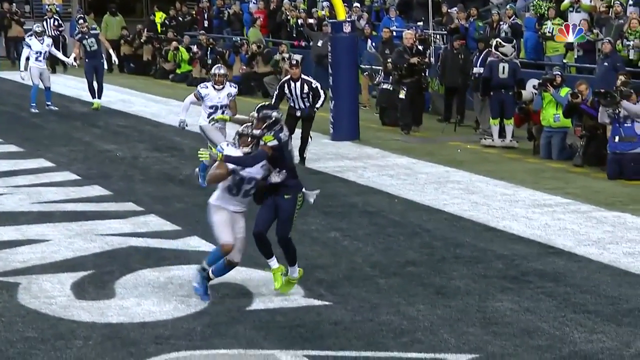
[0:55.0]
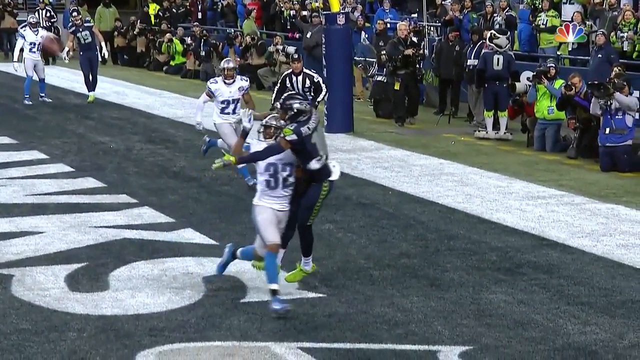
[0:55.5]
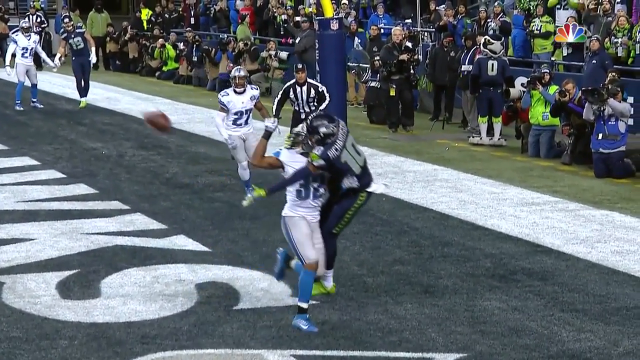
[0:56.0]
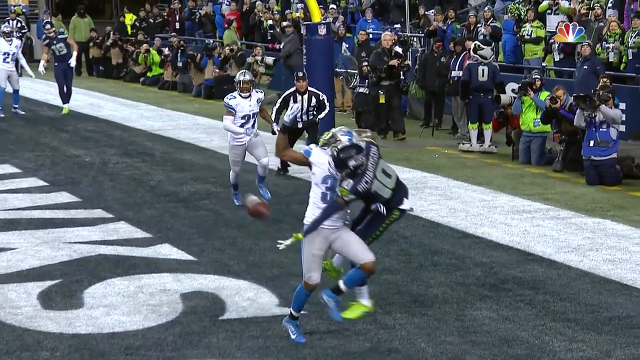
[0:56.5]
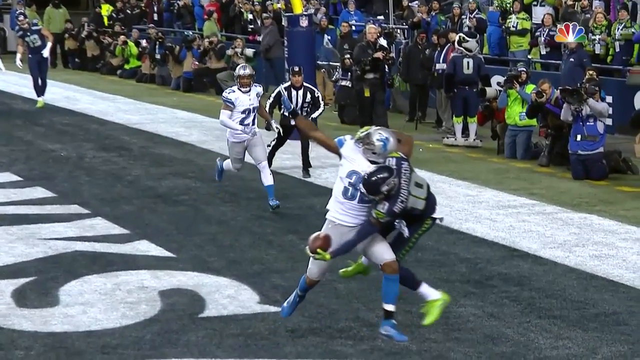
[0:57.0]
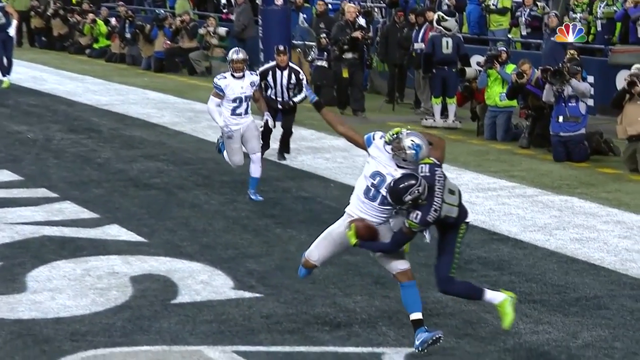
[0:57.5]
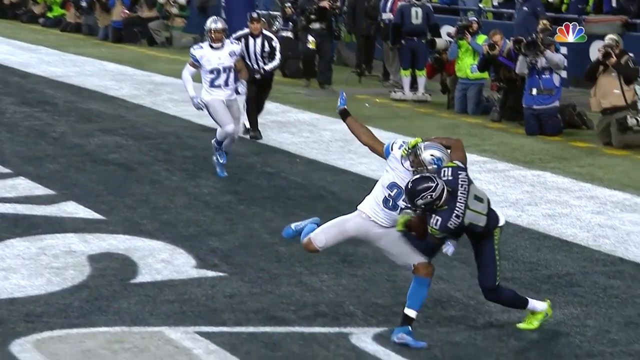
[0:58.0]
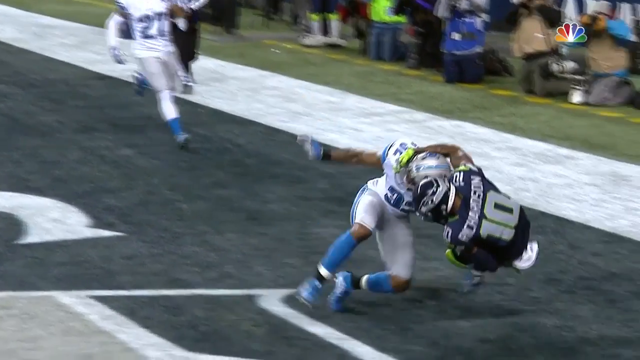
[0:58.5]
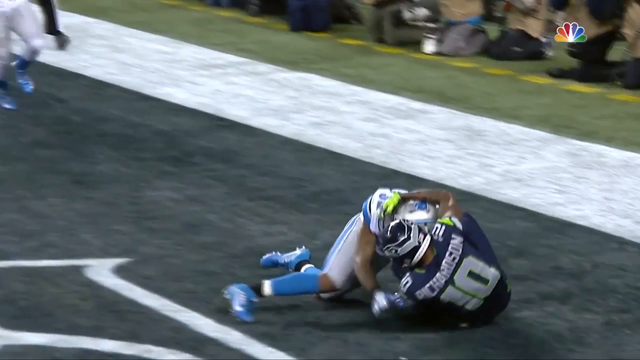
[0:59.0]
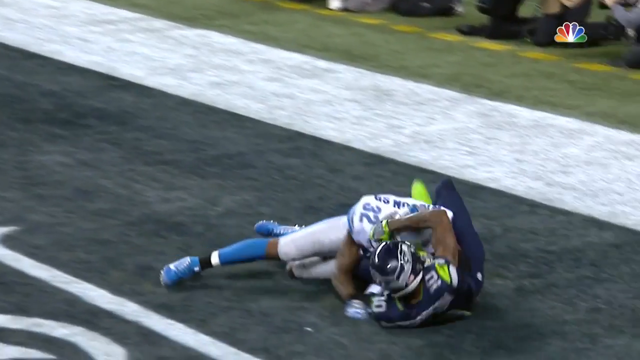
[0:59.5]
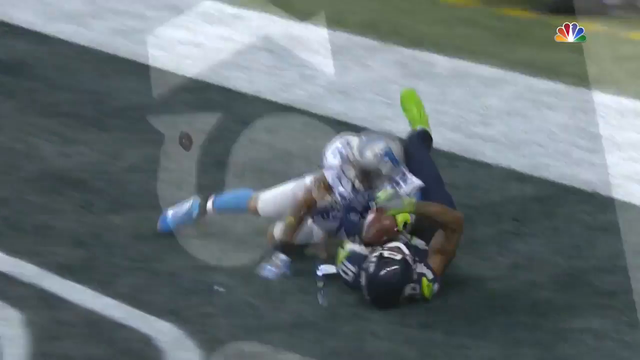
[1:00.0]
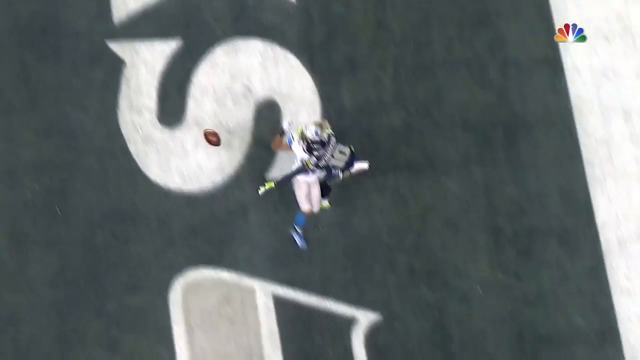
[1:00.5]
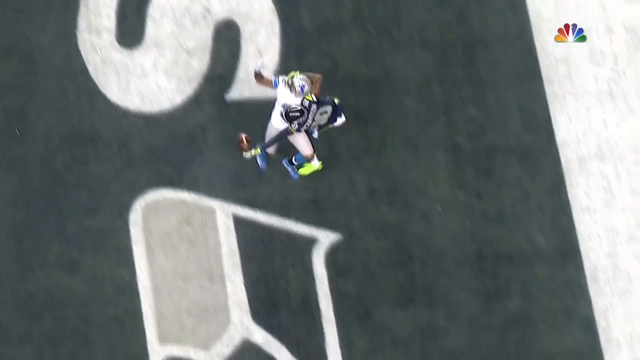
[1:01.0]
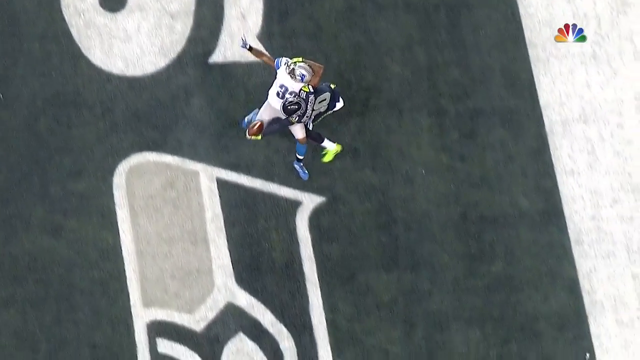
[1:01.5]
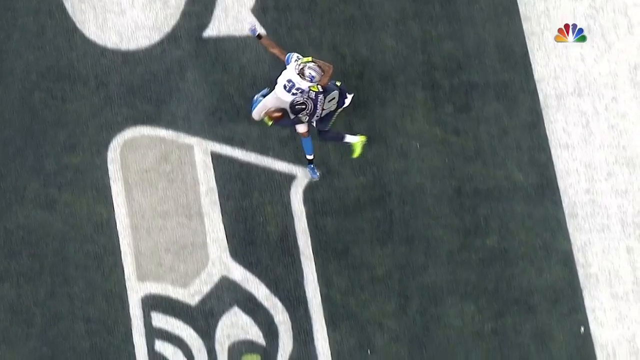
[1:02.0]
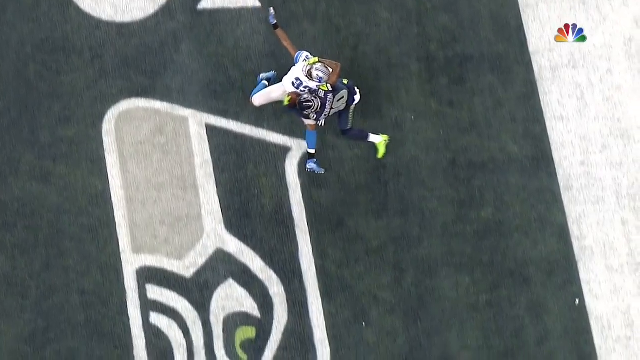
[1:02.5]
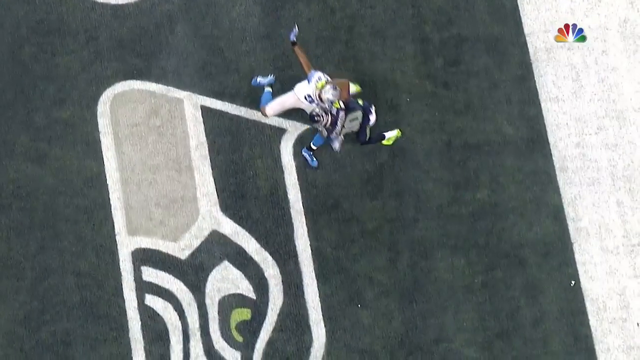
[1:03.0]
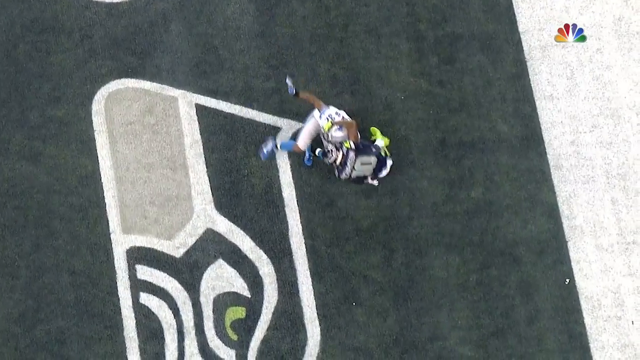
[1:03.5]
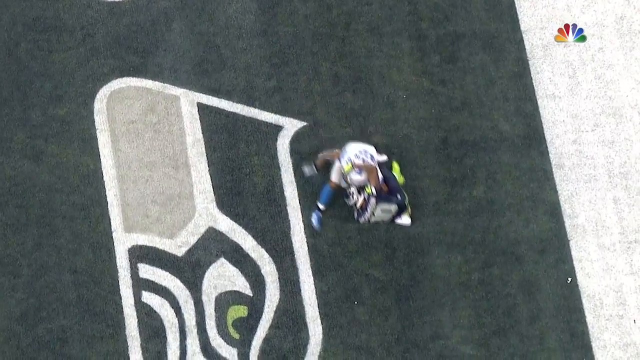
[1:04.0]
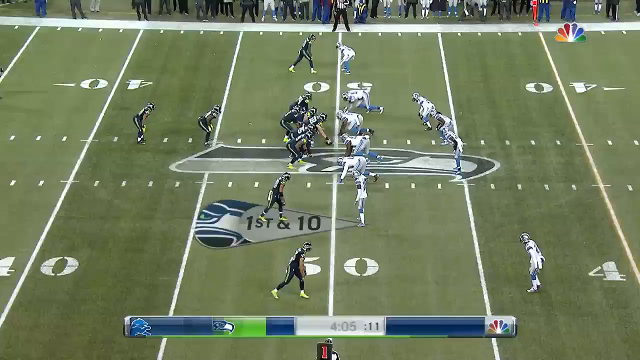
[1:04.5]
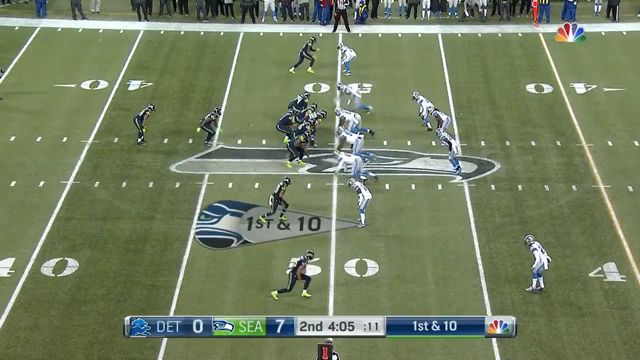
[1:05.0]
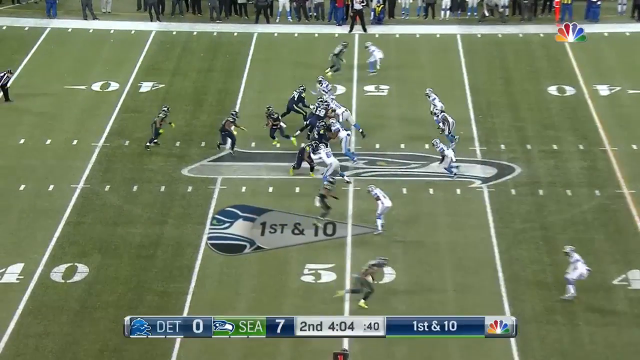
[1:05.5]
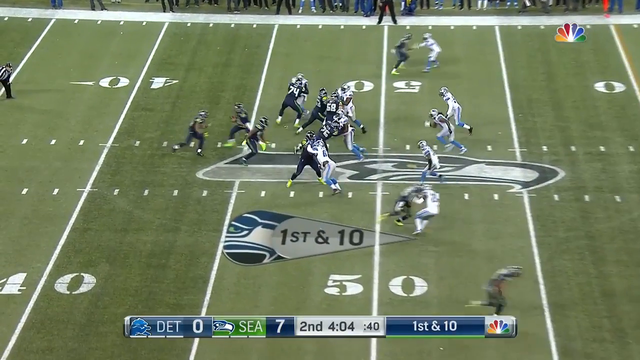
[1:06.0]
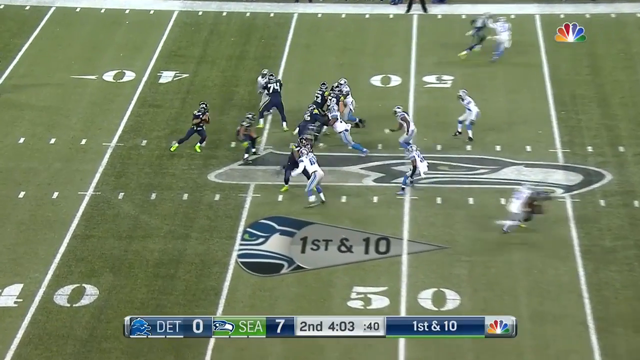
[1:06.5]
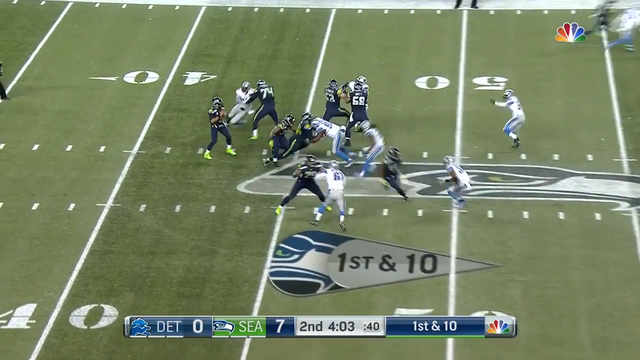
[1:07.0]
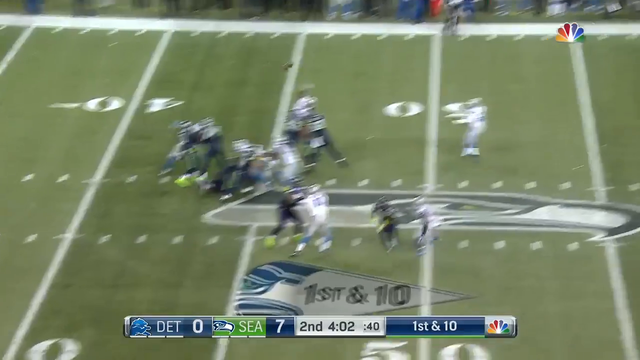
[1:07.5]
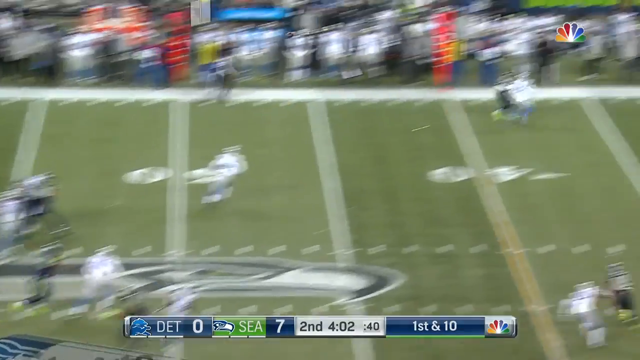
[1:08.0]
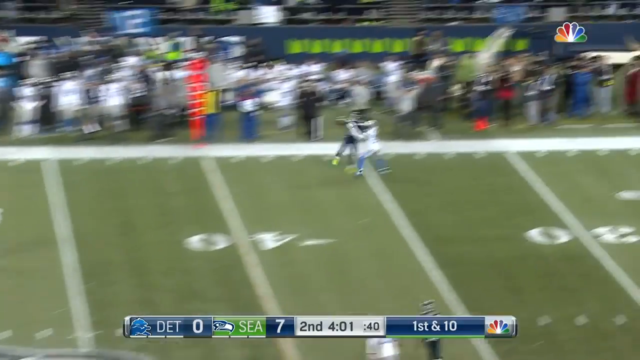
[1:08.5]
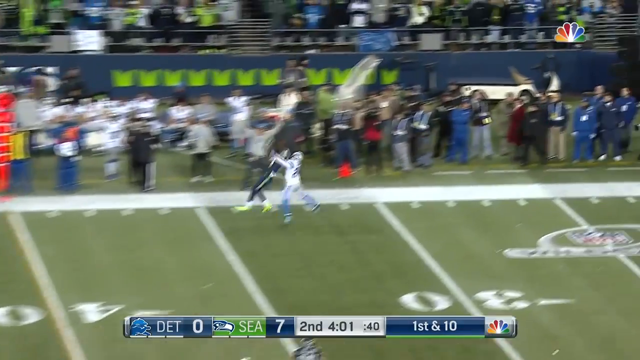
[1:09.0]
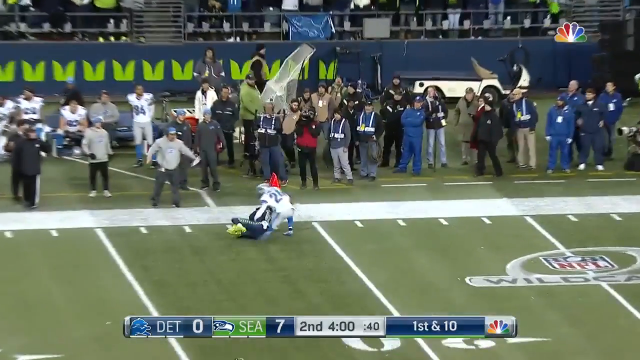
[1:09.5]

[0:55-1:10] The touchdown replay is shown from a side angle and then from above, looking directly down on the play as the Seahawks player catches the ball in the end zone and both he and the Lions player fall in the end zone. The scene quickly changes to a play at midfield, with the Seahawks on offense at their own 50-yard line, lined up on the left, and the Lions on defense on the right. Text at the bottom reads "Detroit 0, Seahawks 7"; it is the second quarter with 4 minutes and 4 seconds to go, 11 seconds on the play clock, and 1st and 10. The Seahawks quarterback takes the snap, drops back, and throws a deep pass to a receiver who makes another impressive catch; it is the same player who caught the touchdown, number 10.